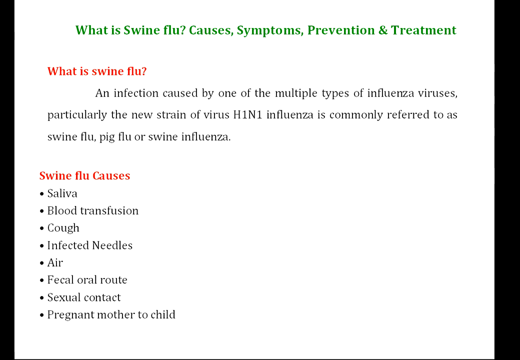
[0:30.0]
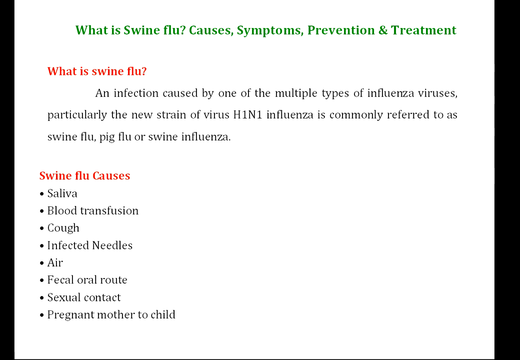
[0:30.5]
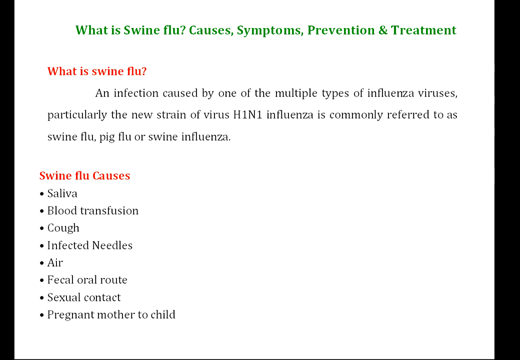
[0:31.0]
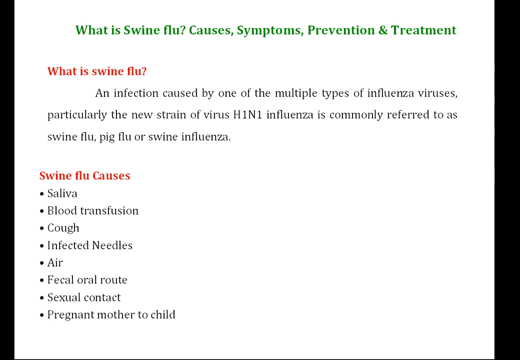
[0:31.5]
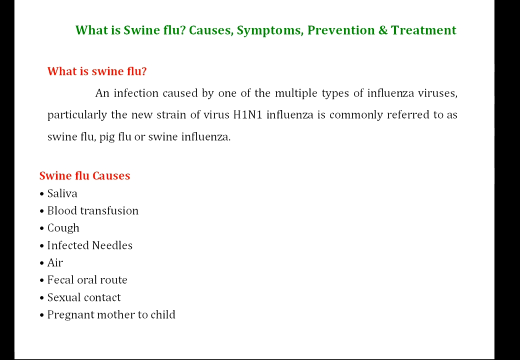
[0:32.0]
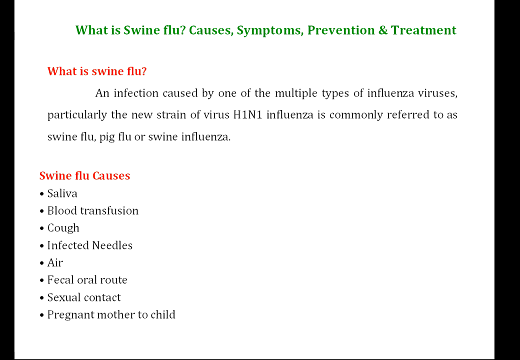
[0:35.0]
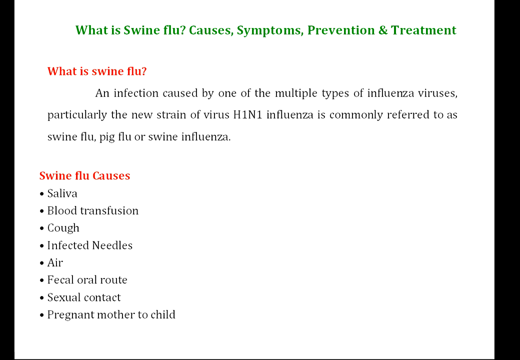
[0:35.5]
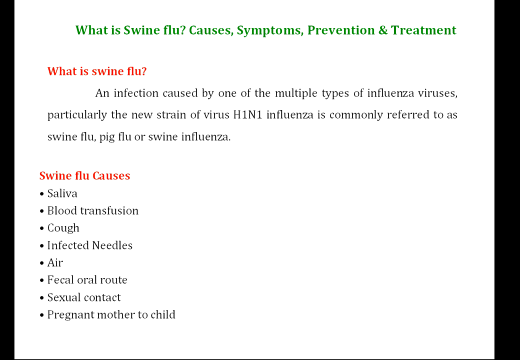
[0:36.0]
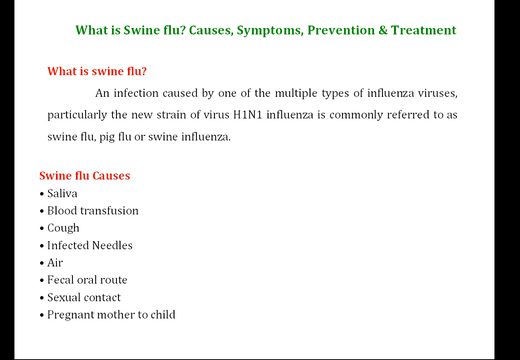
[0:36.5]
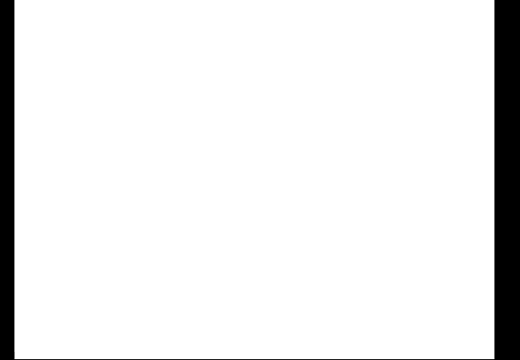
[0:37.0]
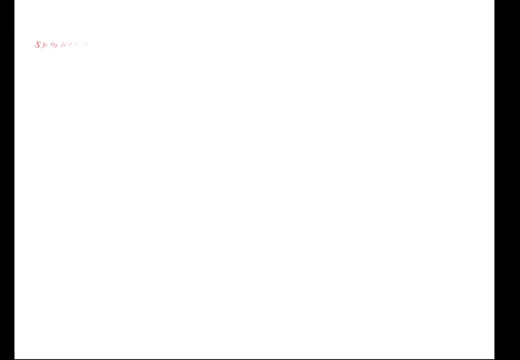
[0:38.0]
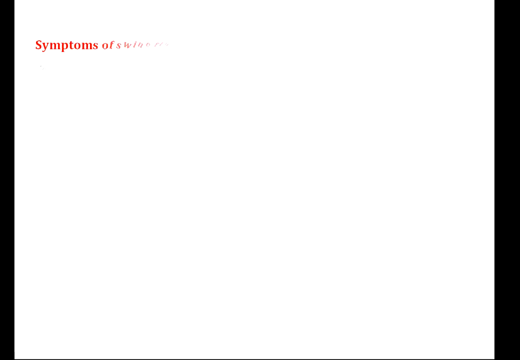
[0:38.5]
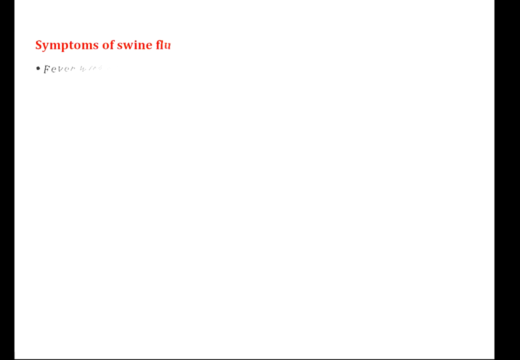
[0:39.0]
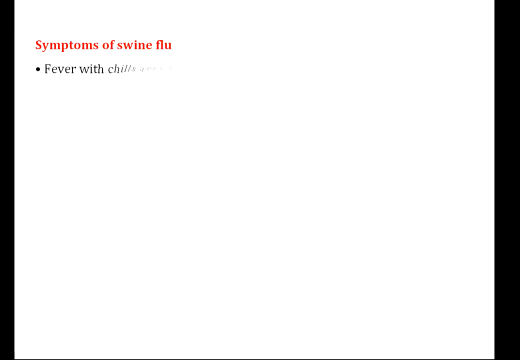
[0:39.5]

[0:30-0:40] The screen shows text reading "What is swine flu? Causes, Symptoms, Prevention, and Treatment." Below this it reads "What is swine flu? An infection caused by one of the multiple types of influenza viruses, particularly the new strain of virus H1N1 influenza, is commonly referred to as swine flu, pig flu, or swine influenza." Below that, a header reads "swine flu causes", and the causes are listed with bullet points: saliva, blood transfusion, cough, infected needles, air, fecal oral route, sexual contact, pregnant mother to child. The screen then fades to one that begins to list the symptoms of swine flu, but the list has not yet filled in when the shot ends.